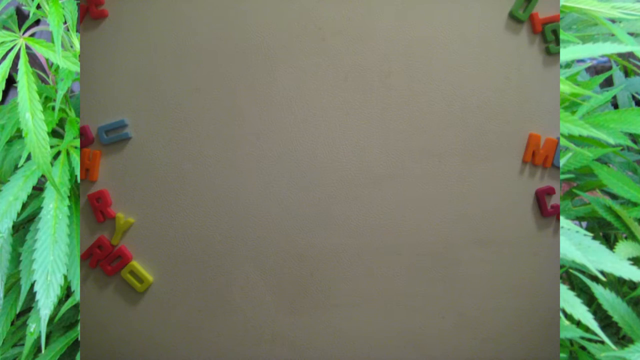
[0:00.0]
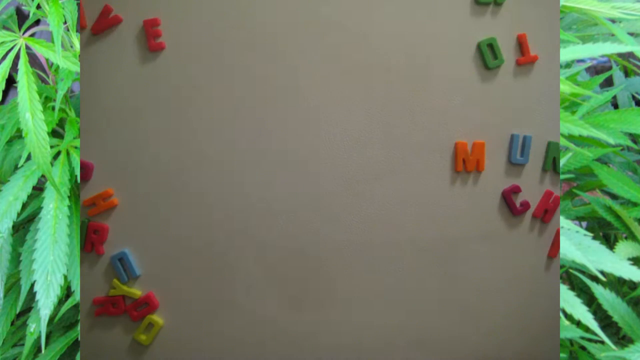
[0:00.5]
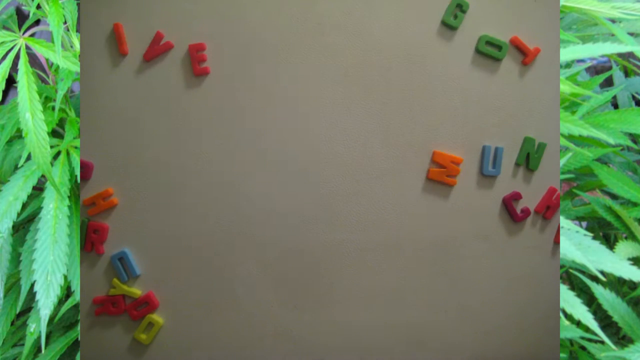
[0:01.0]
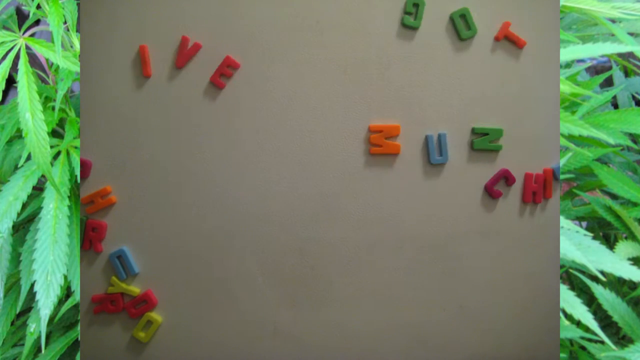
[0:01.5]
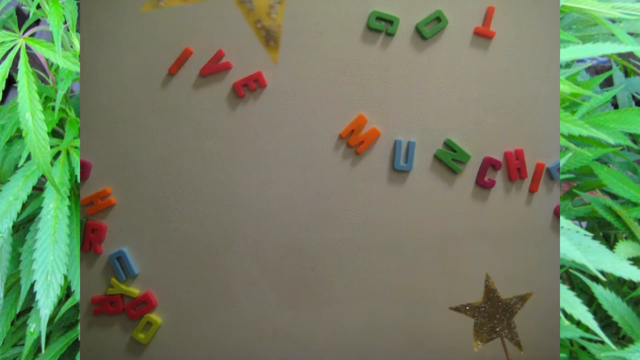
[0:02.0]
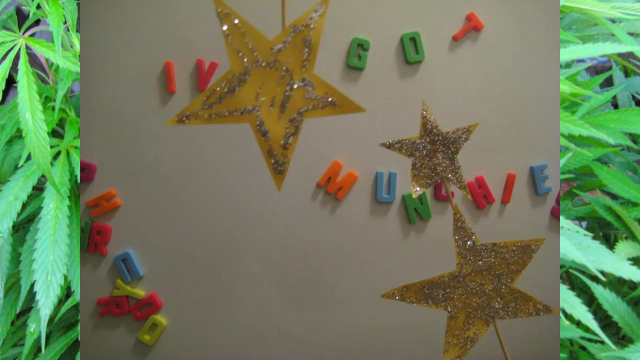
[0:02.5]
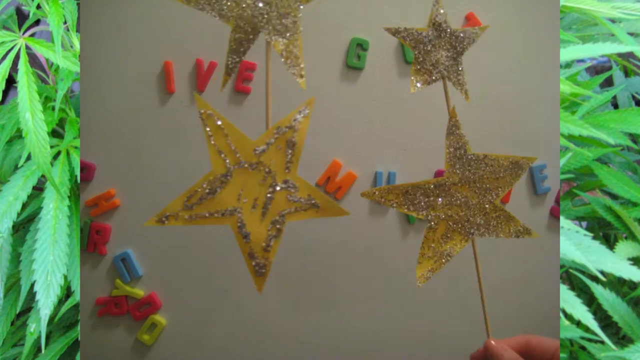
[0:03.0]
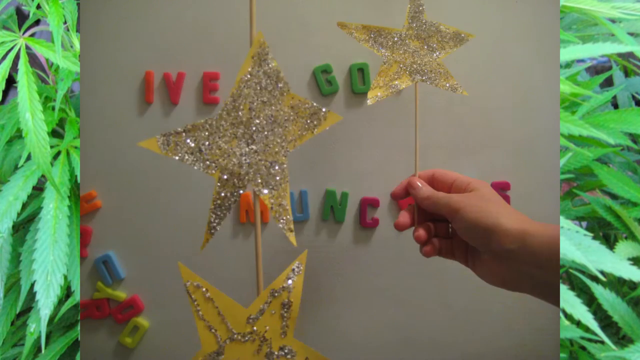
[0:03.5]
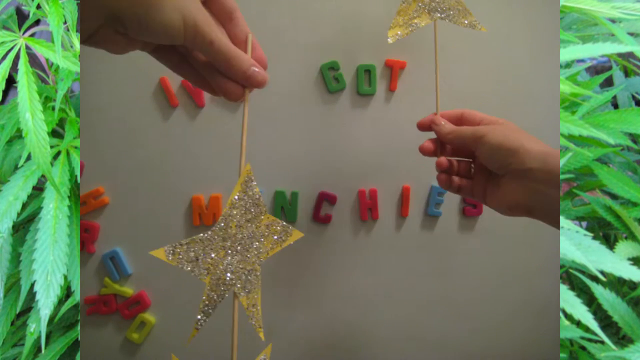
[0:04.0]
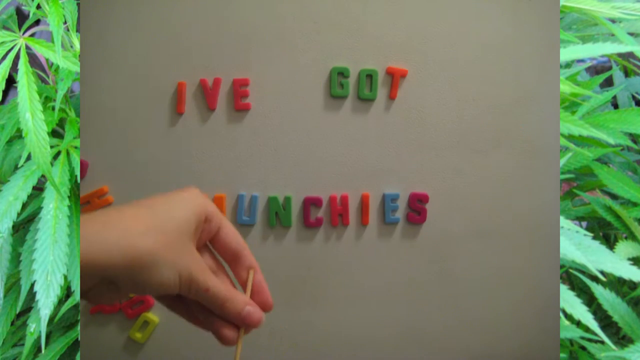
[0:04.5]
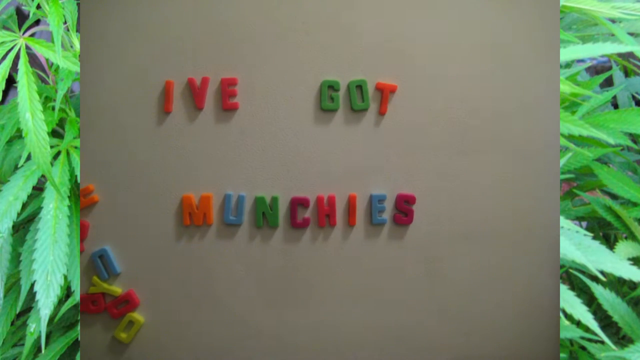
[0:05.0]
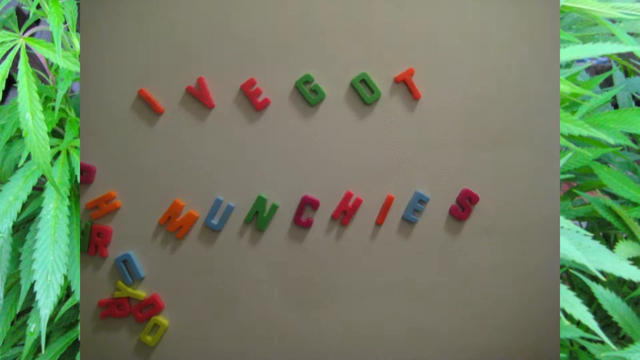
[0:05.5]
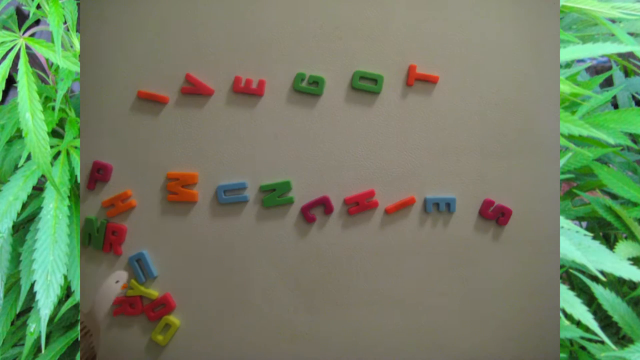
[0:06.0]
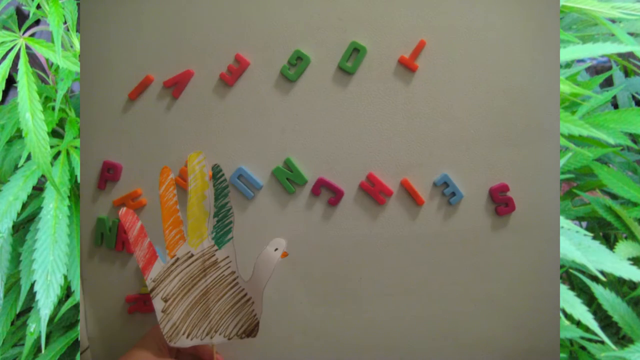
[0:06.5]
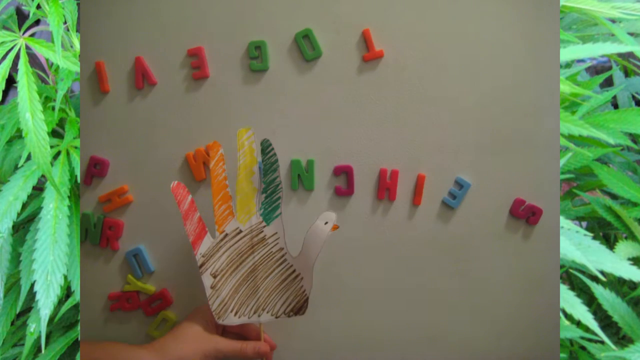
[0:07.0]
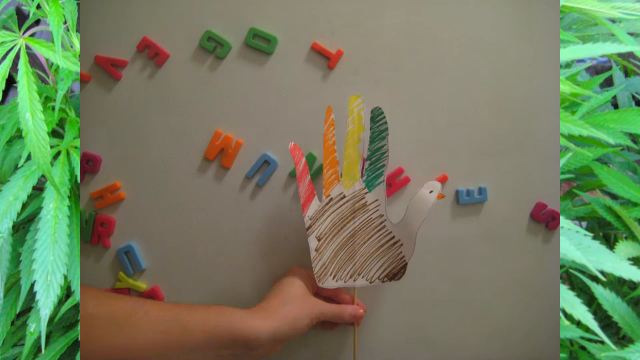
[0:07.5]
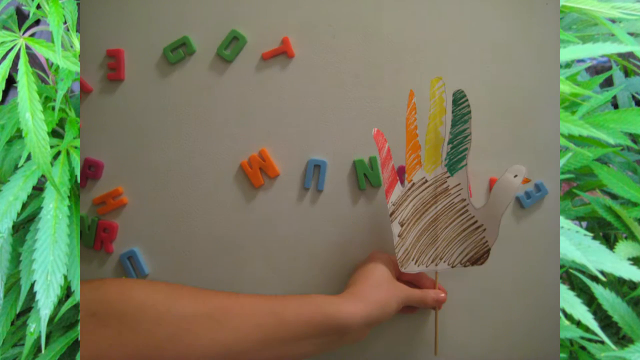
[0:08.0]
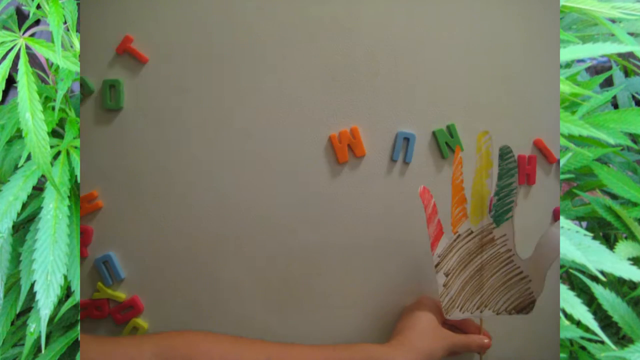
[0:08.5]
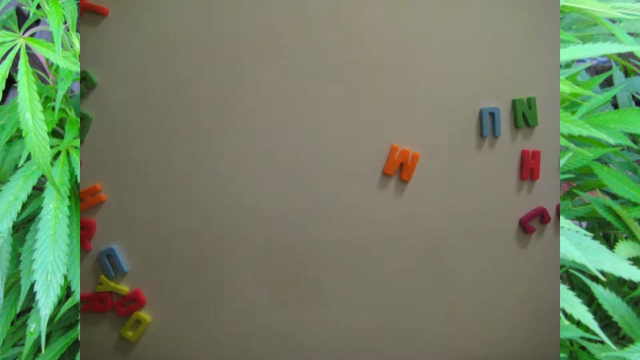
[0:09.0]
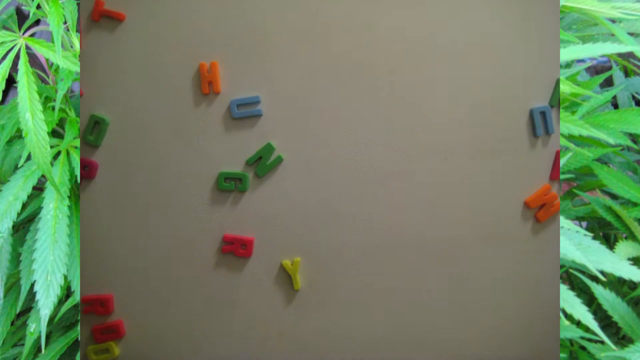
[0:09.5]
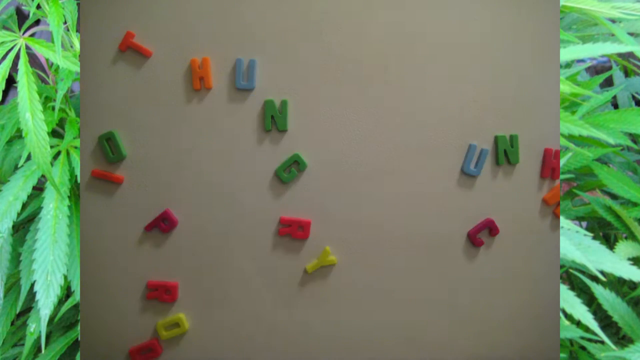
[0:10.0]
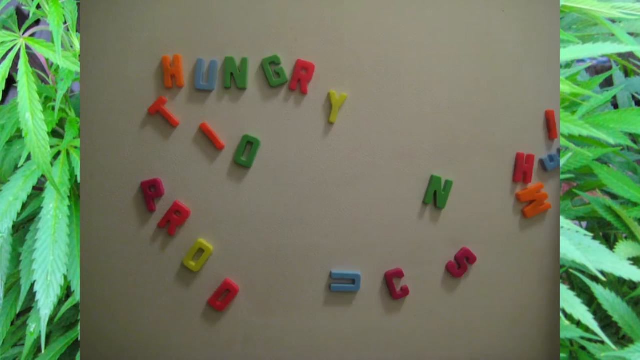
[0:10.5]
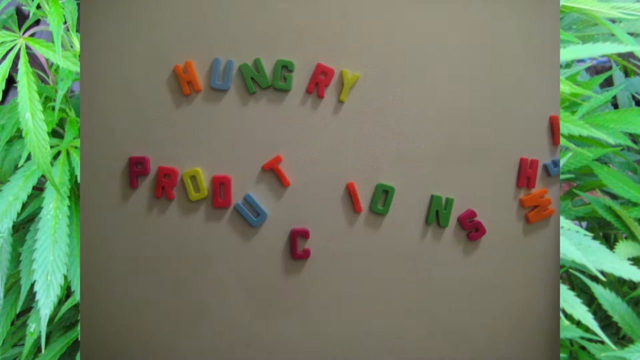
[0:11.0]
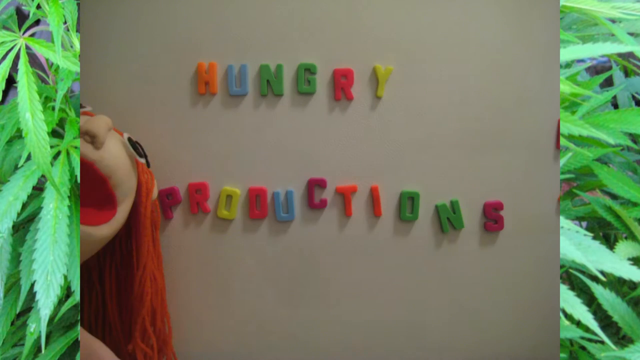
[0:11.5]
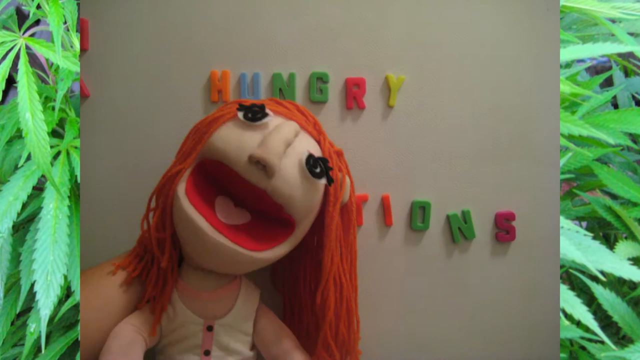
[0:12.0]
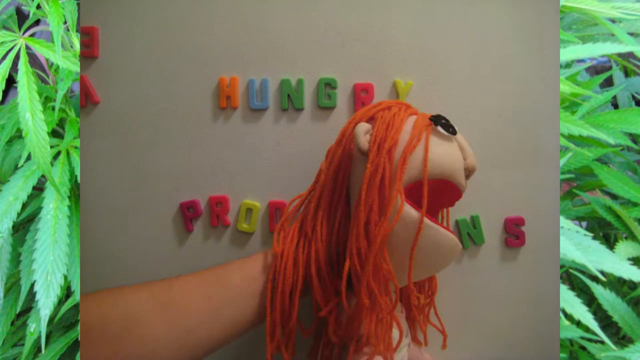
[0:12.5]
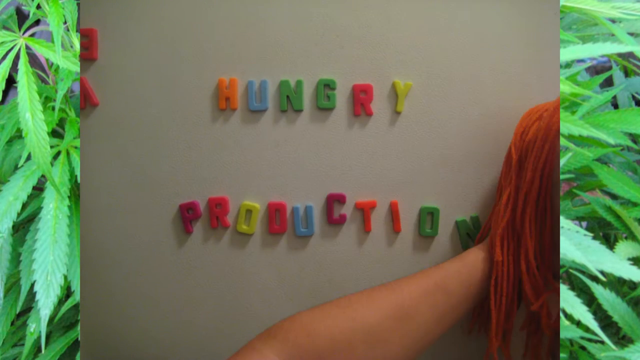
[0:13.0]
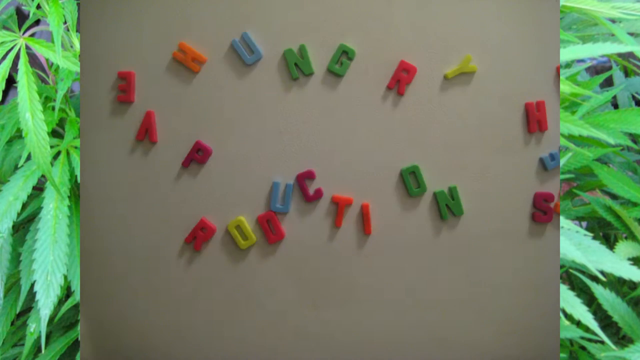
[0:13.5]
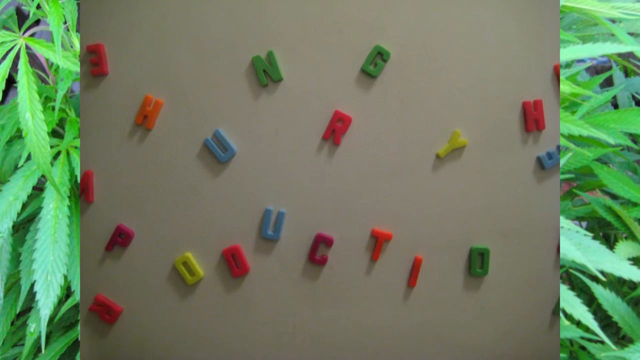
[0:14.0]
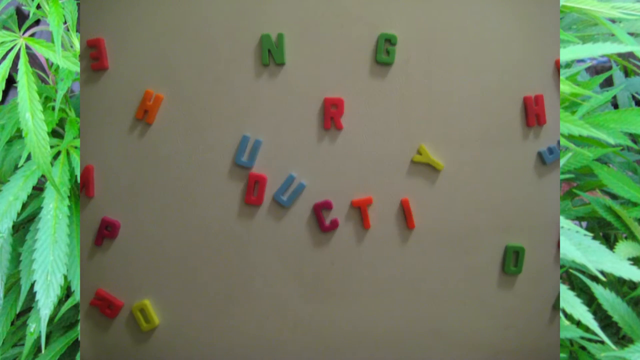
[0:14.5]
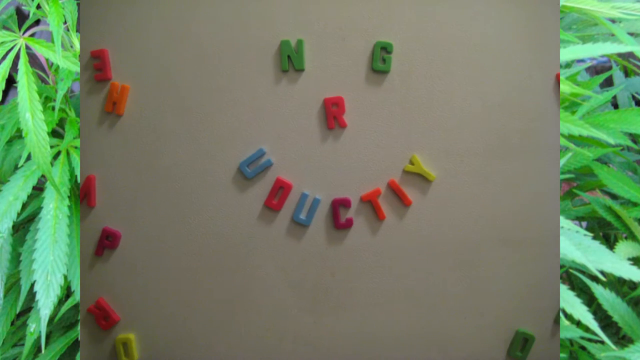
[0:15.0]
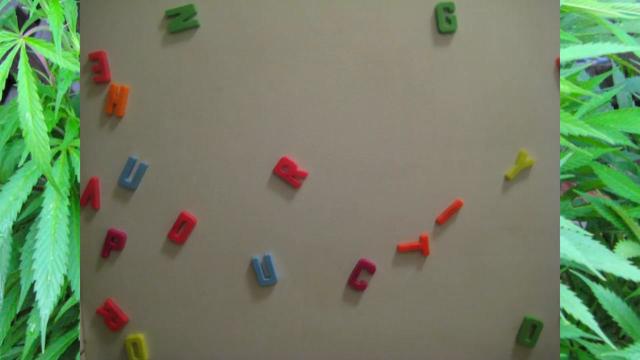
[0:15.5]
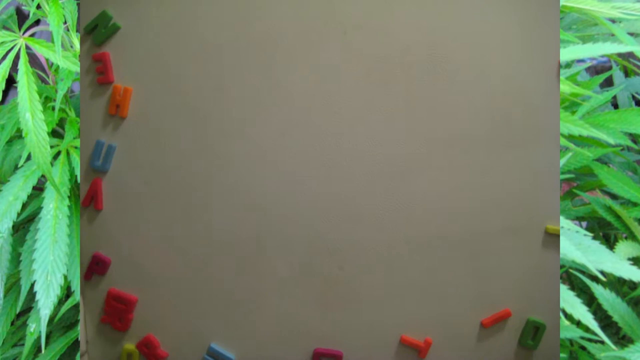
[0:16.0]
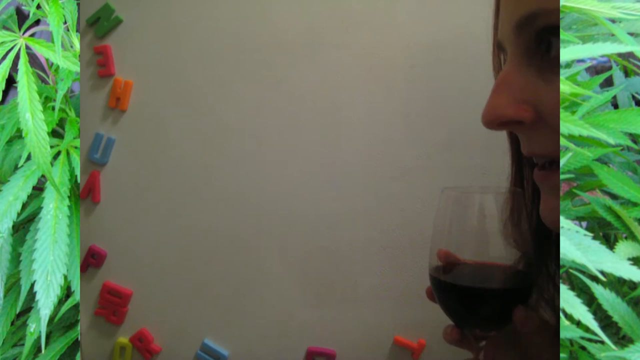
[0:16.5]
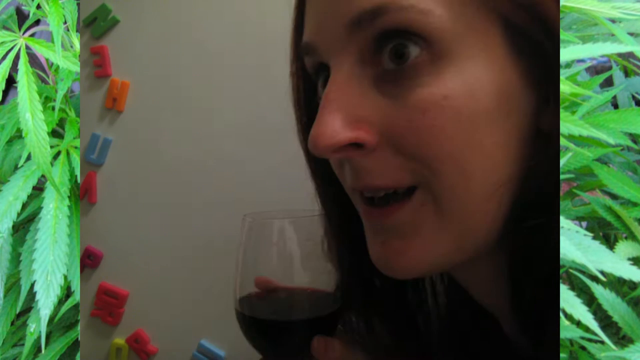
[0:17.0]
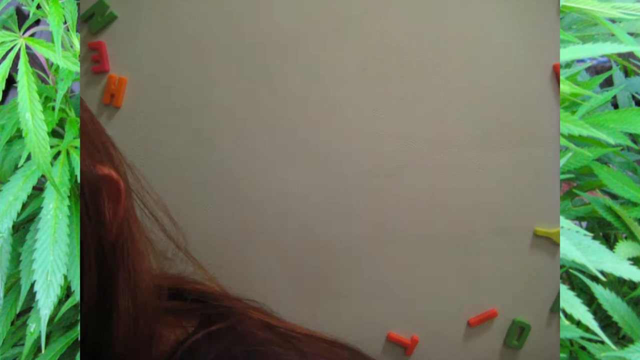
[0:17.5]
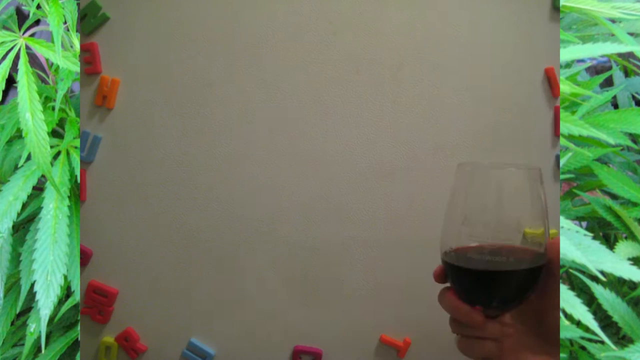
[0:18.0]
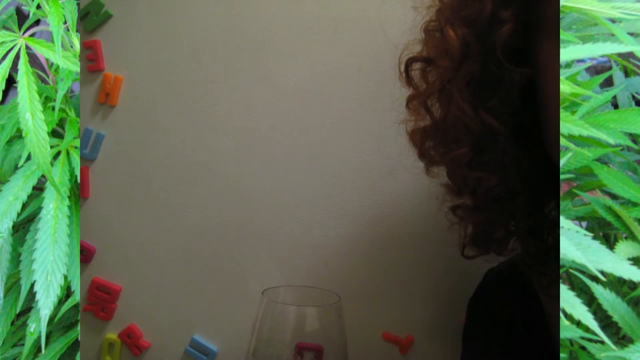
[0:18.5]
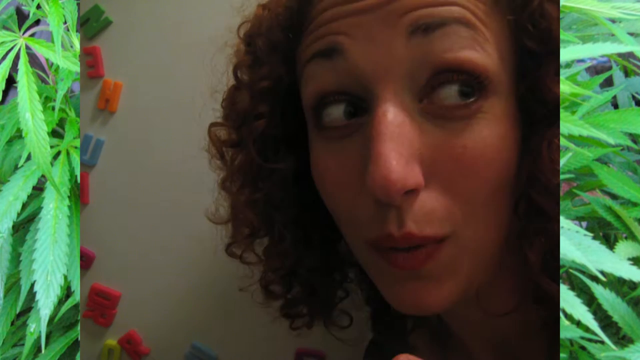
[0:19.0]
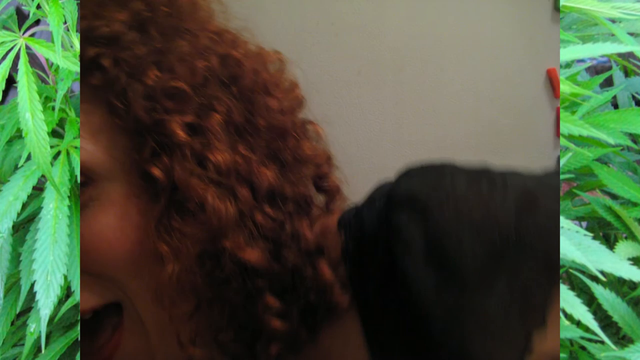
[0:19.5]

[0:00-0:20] Magnets on what looks like a fridge move together in a sort of stop-animation style. Hands hold stars on sticks covered in sparkly glitter, and the stars move, again in stop animation. The letters form "i've got munchies". Someone's hand and a Thanksgiving turkey-like thing come across the frame. The letters then form "hungry productions". A puppet with yarn hair, which is red, appears. More words form with the letters, something like "n r g audacity". A face appears, and another woman holding a glass of wine, with curly red hair, goes by the camera along with the others. This seems to be a stop-animation intro for some kind of cooking or food show.